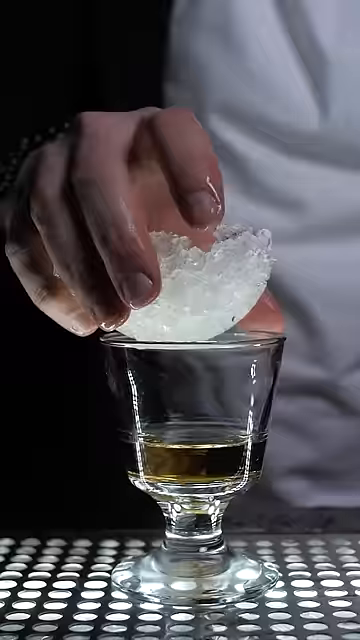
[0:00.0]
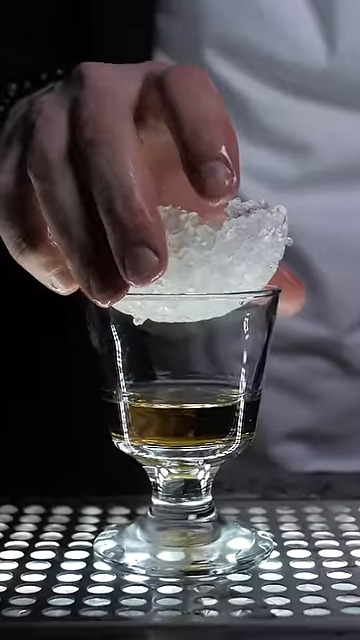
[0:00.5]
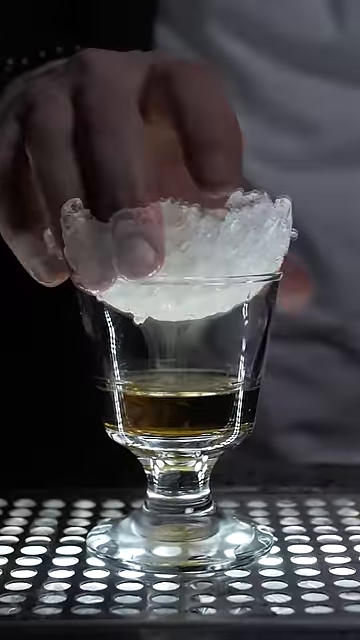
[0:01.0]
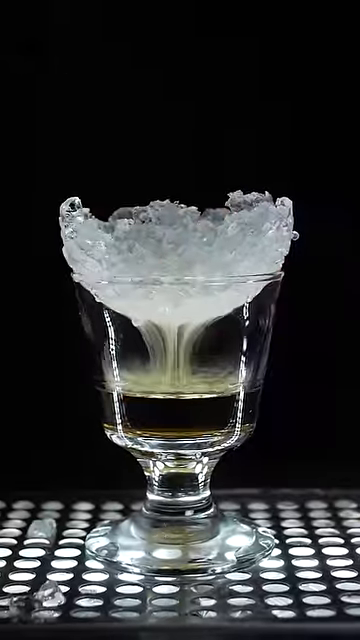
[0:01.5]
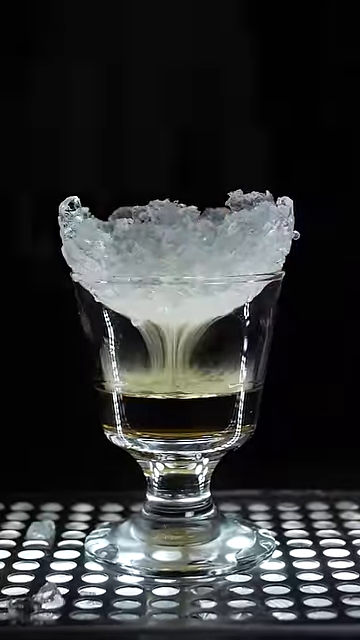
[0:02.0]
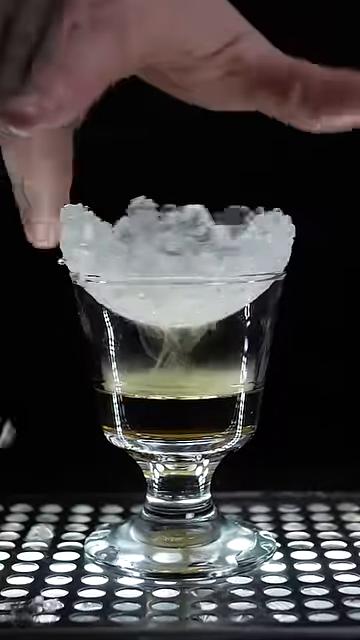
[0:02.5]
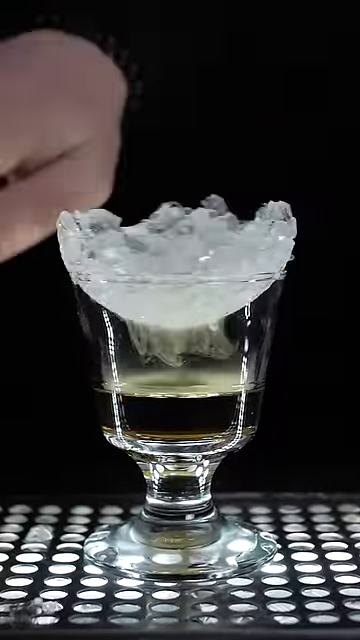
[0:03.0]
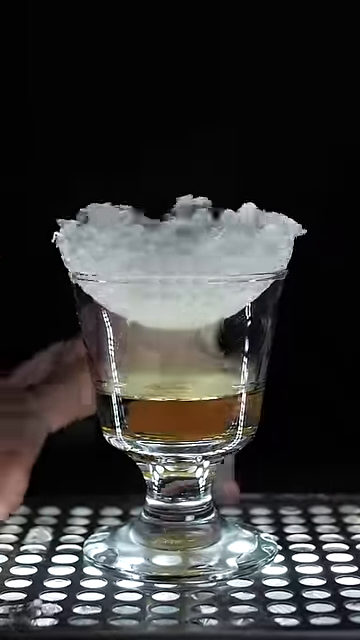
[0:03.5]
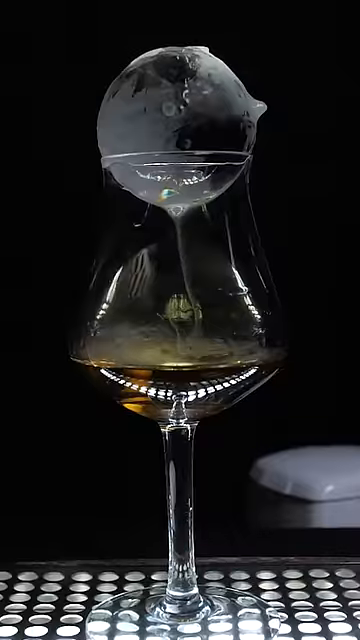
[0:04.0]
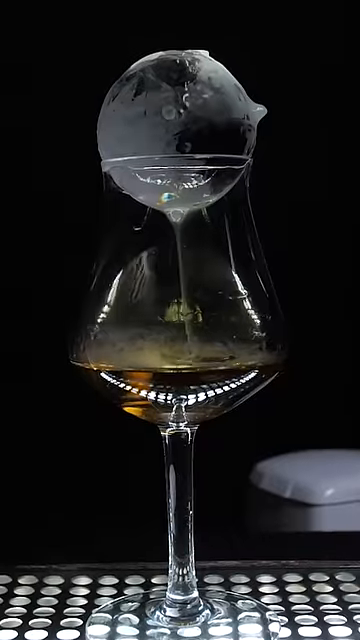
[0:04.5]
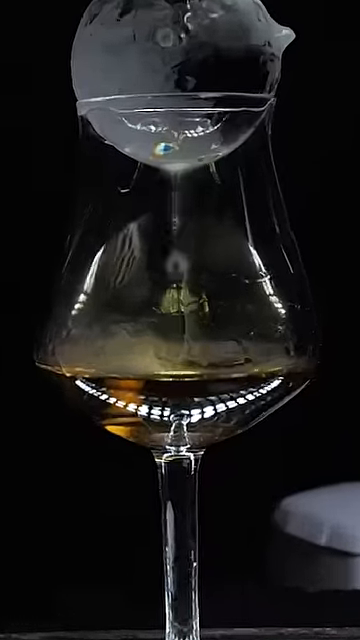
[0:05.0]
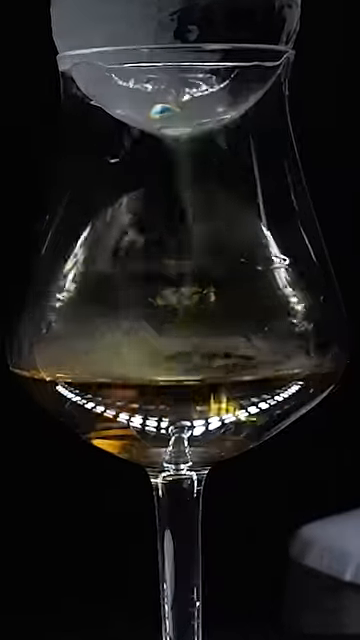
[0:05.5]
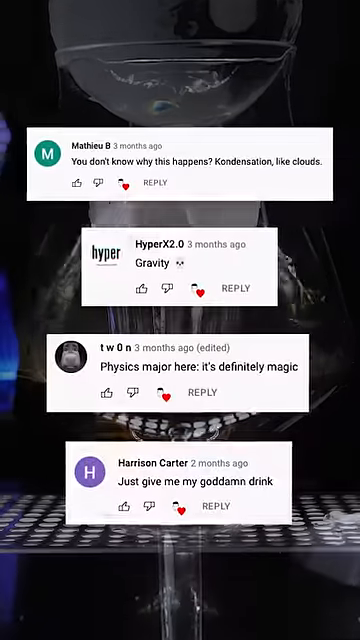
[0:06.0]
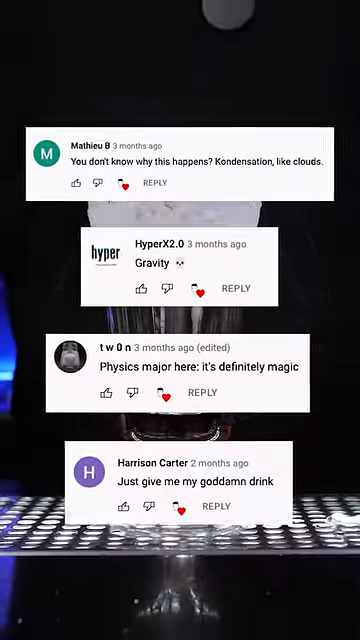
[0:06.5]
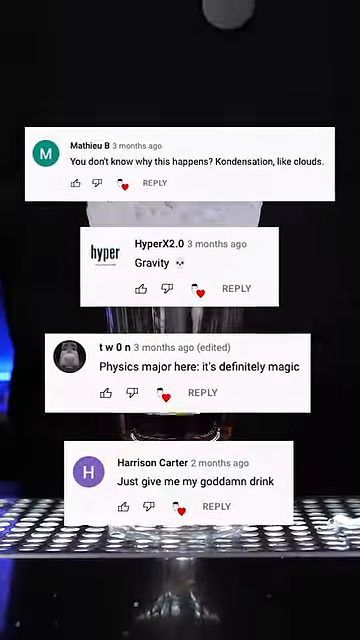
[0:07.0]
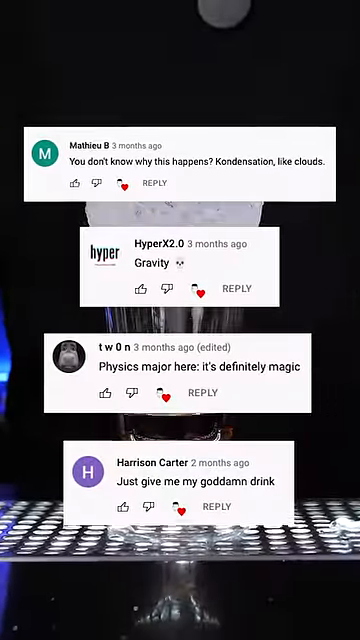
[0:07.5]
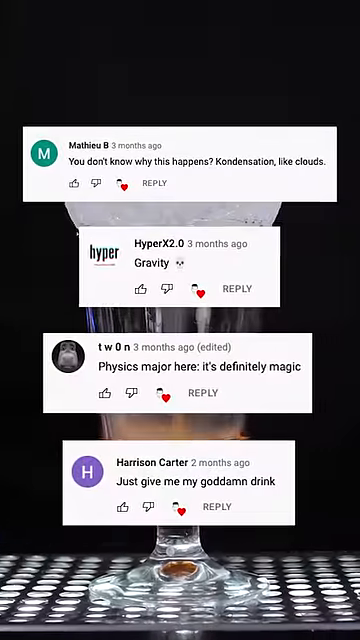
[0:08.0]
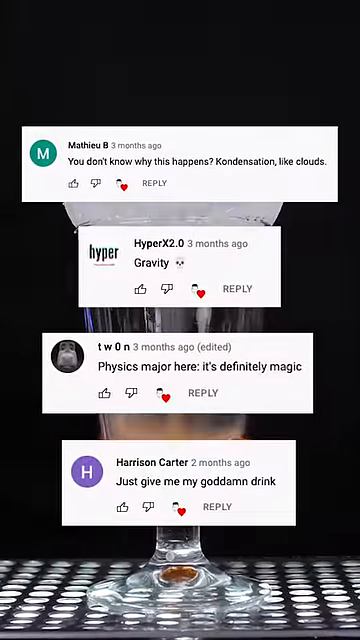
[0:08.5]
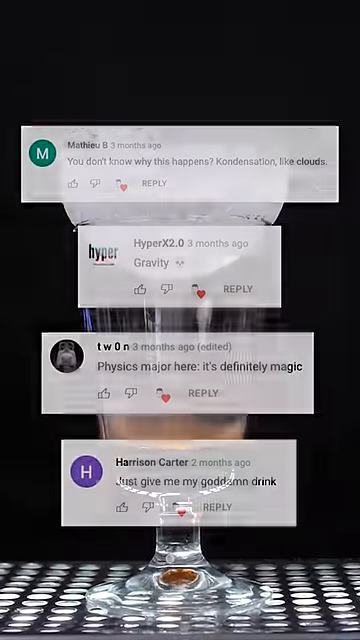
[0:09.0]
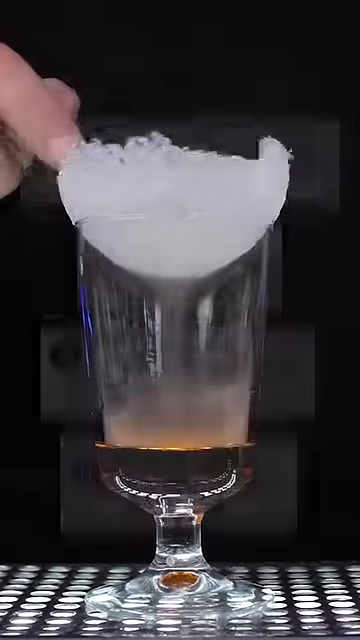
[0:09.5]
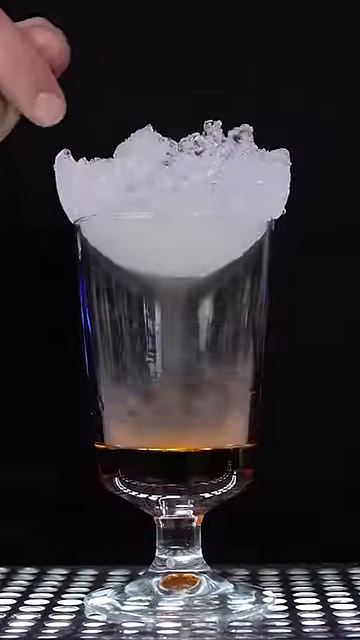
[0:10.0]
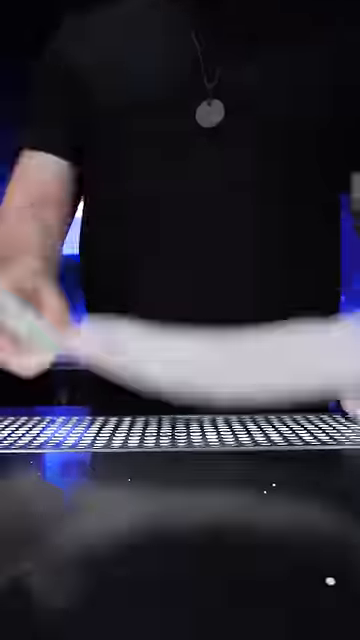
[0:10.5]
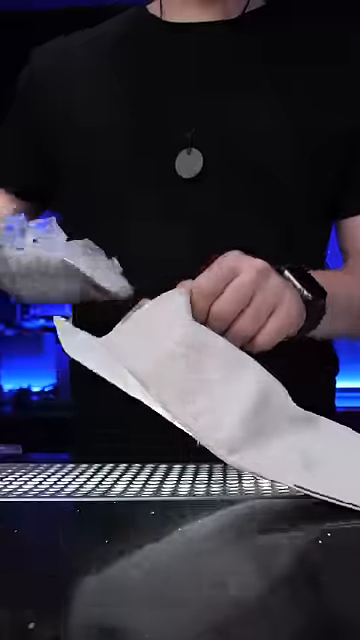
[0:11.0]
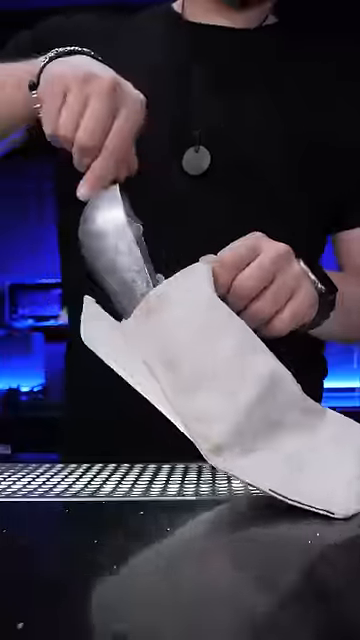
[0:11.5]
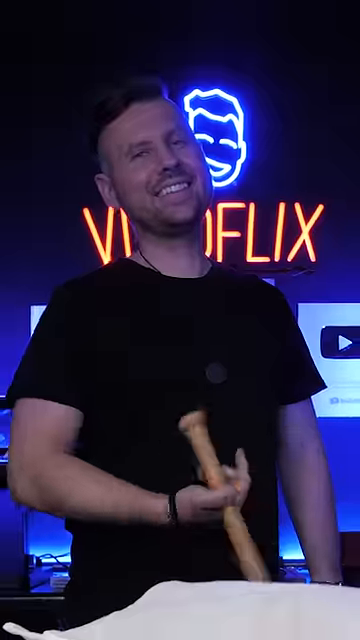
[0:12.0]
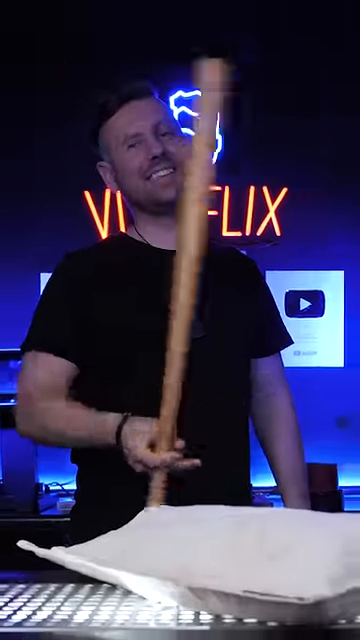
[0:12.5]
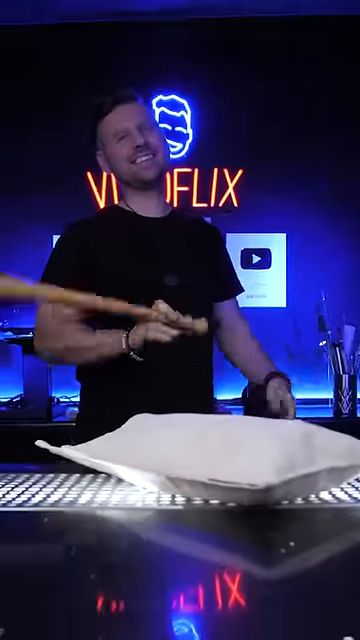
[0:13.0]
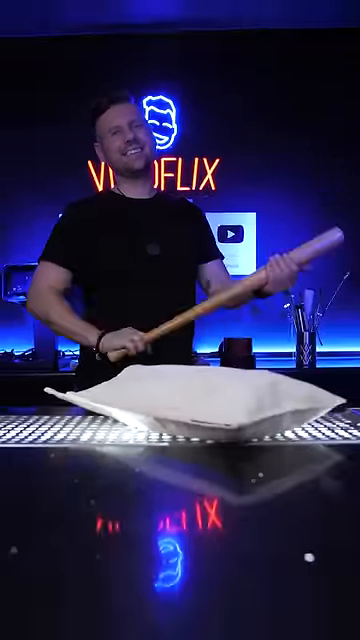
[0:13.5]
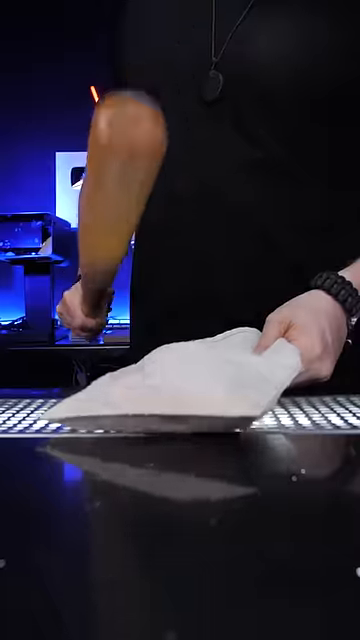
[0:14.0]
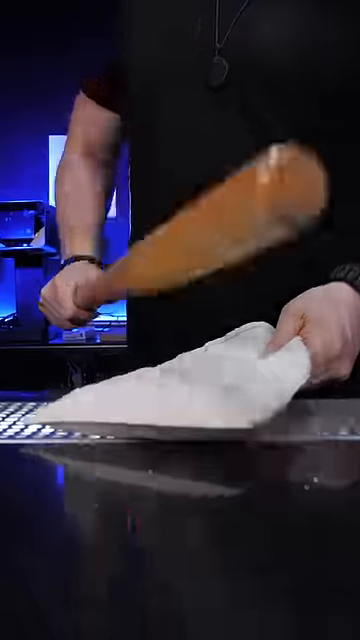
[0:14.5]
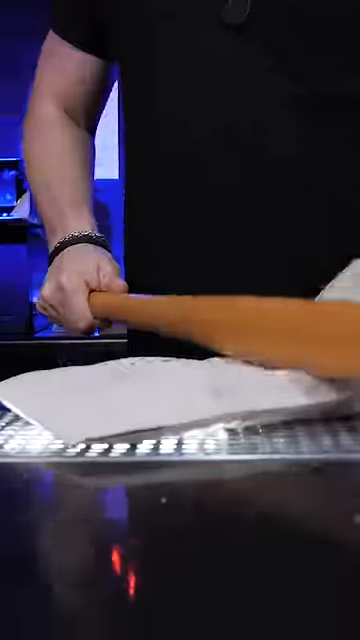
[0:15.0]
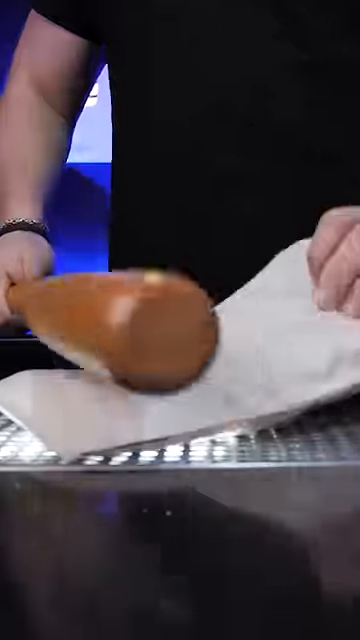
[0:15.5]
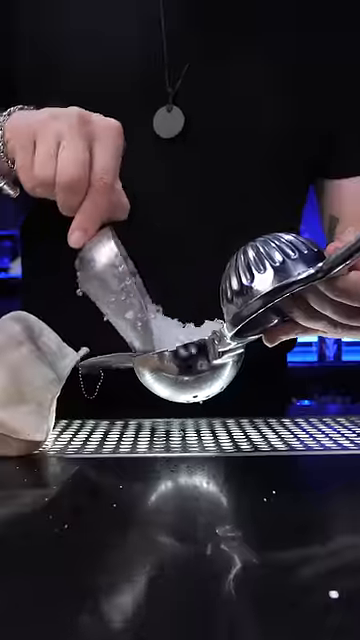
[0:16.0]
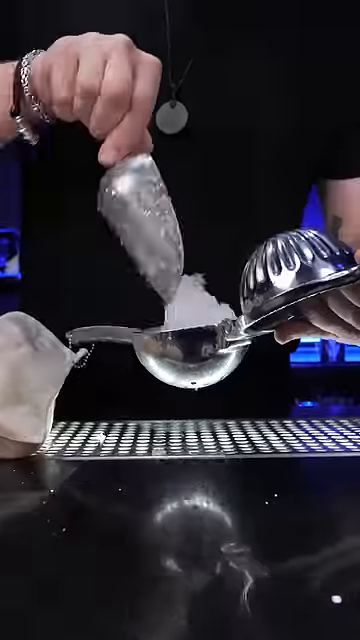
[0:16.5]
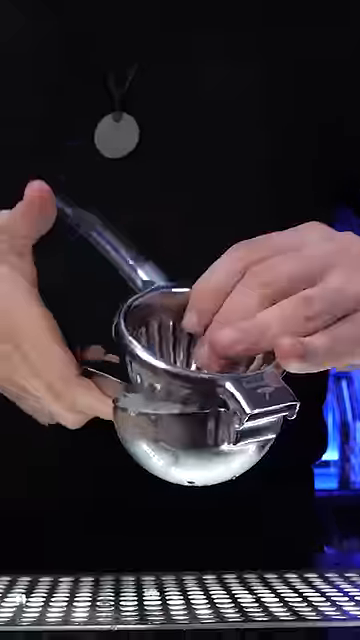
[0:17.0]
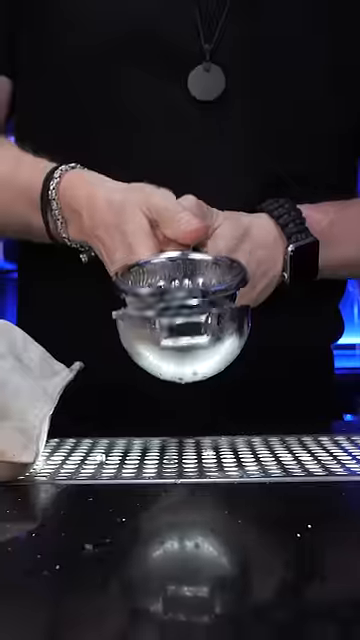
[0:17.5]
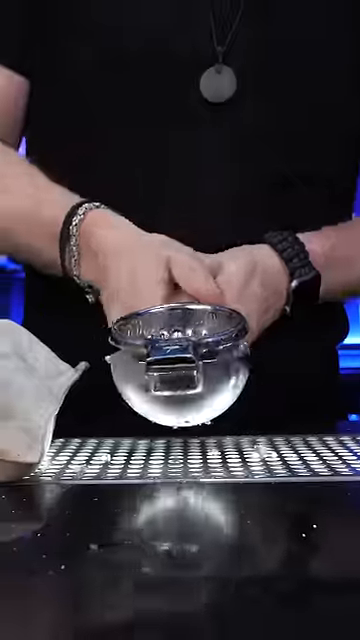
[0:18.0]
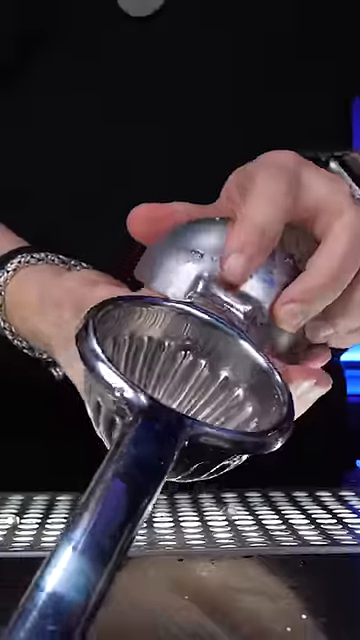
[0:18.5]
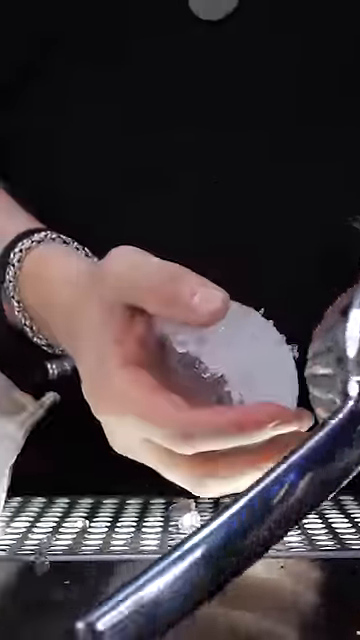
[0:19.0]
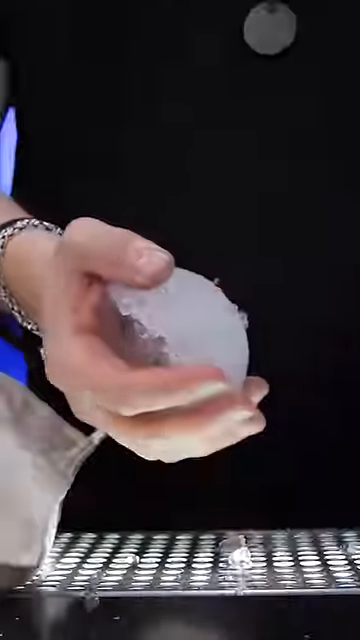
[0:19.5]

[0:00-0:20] Against a black screen, there is a see-through, clear wine glass, and somebody sets a chunk of ice on top of it. Four posts then pop up across the screen. The first, from "Matthew B.", says "You don't know why this happens condensation like clouds". The one underneath, from "hyper X2o", says "gravity". The next, from "Tuan", says "Physics major here. It's definitely magic." The one underneath that, from "Harrison Carter", says "Just give me my goddamn drink". The ice then slowly melts as steam shoots down into the wine glass. Next, a man stands in a dark room with a light blue light sign behind him, with green and orange, that says "flicks". He wears a short-sleeved black shirt and holds a baseball bat in his right hand.